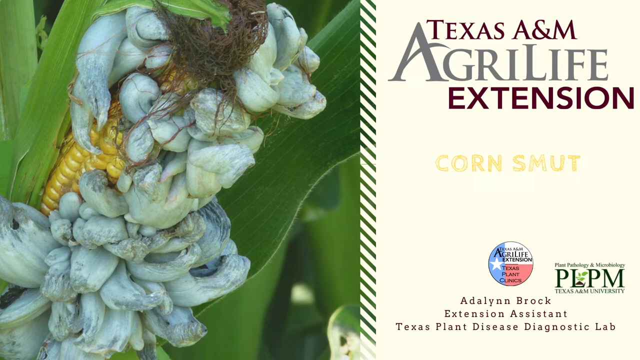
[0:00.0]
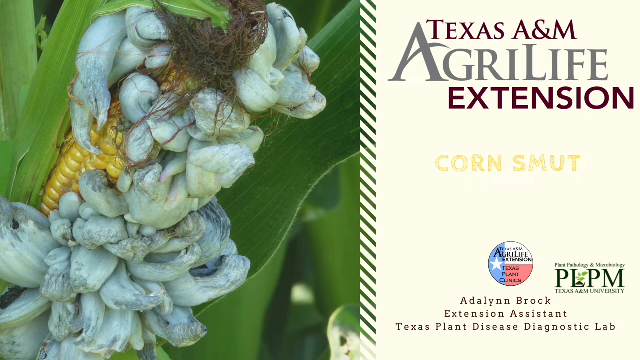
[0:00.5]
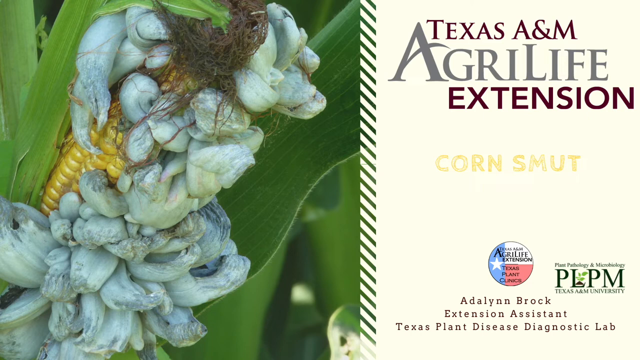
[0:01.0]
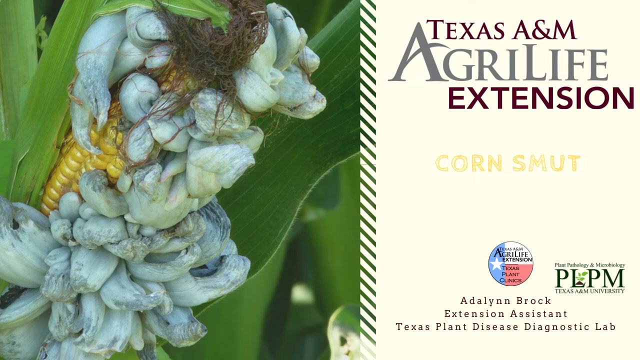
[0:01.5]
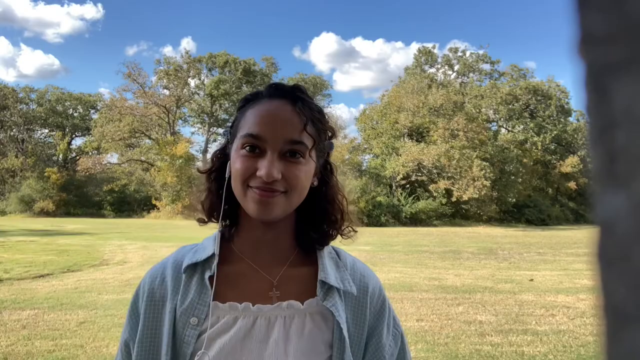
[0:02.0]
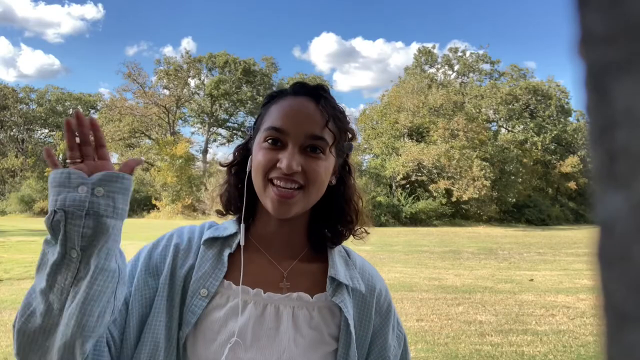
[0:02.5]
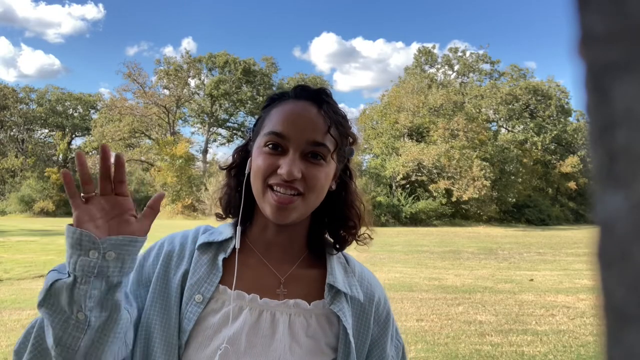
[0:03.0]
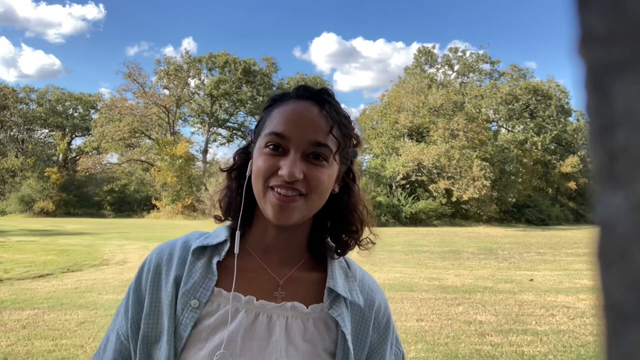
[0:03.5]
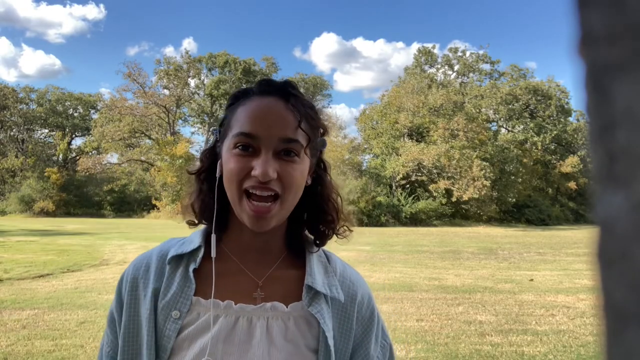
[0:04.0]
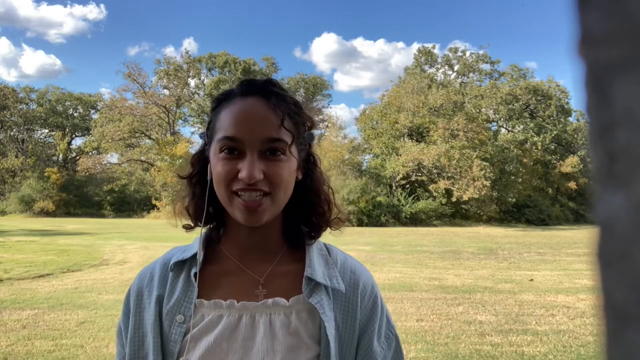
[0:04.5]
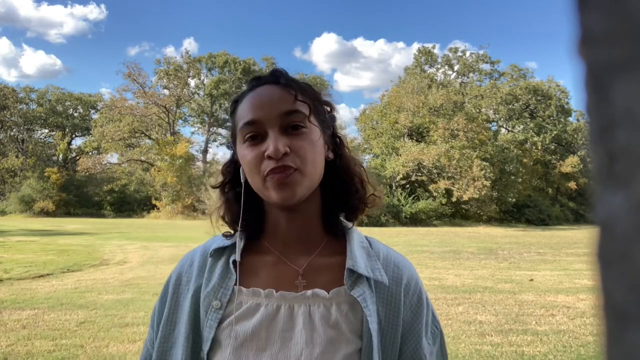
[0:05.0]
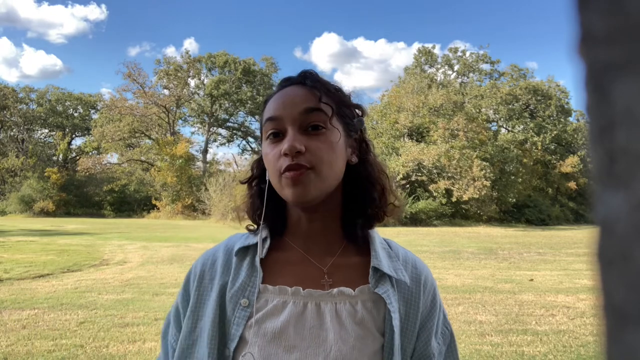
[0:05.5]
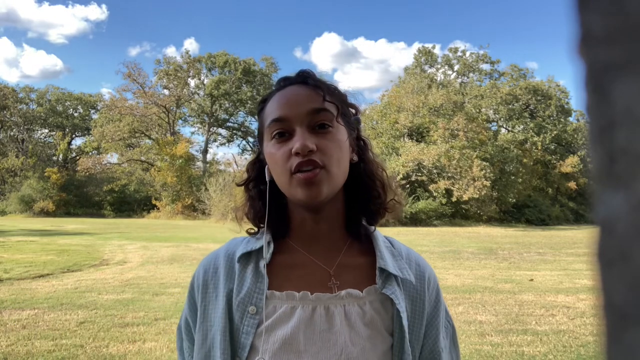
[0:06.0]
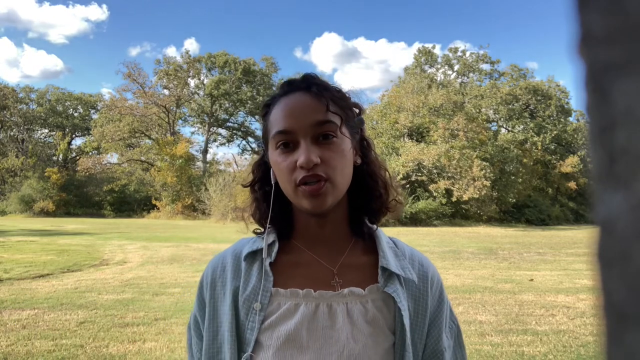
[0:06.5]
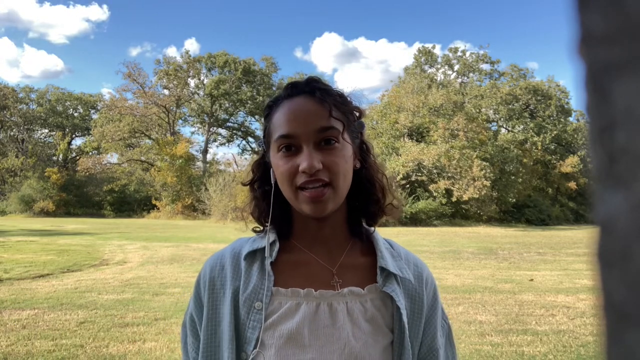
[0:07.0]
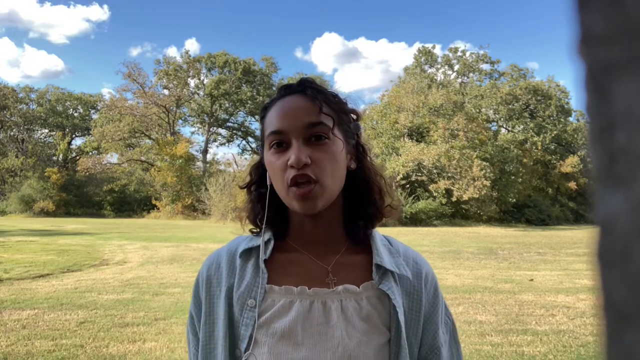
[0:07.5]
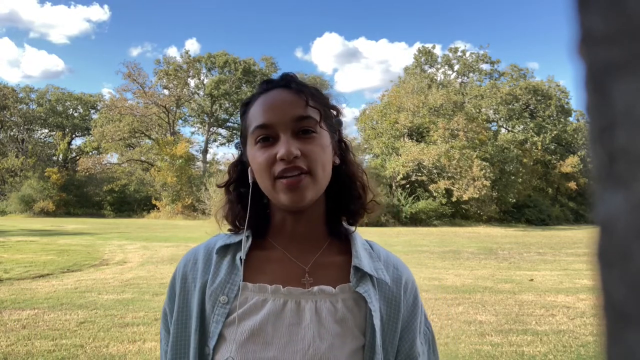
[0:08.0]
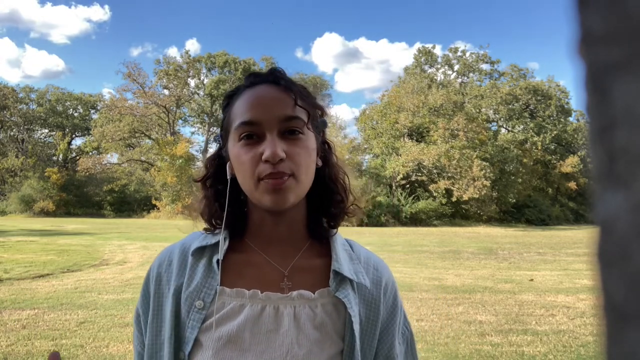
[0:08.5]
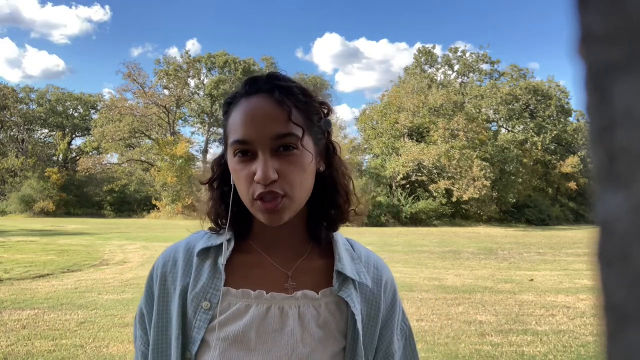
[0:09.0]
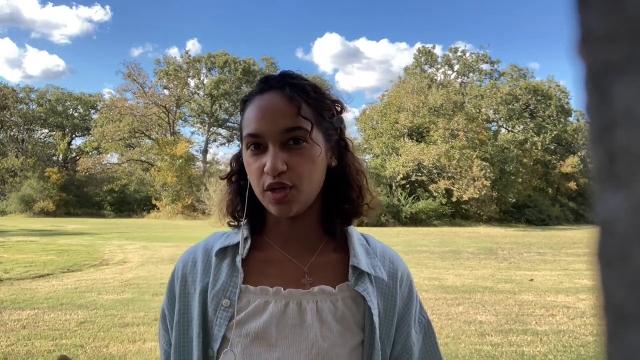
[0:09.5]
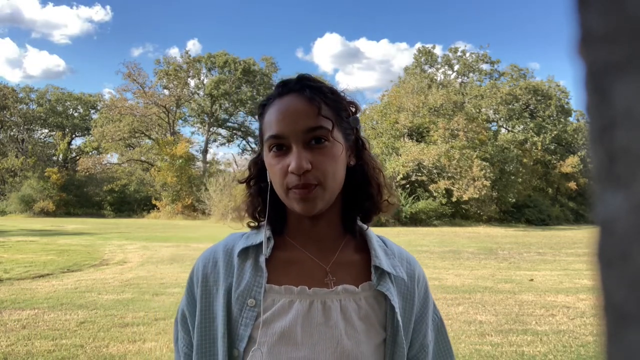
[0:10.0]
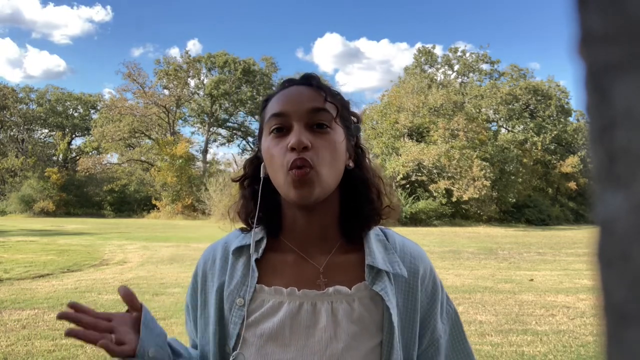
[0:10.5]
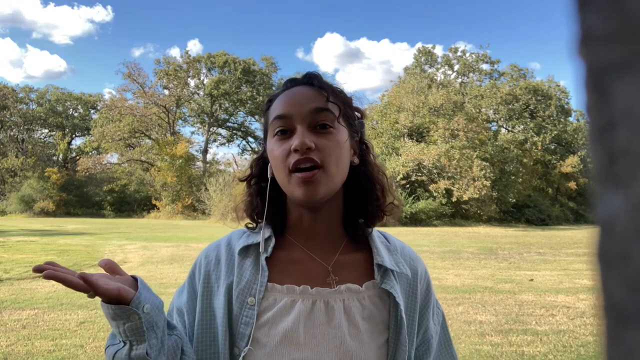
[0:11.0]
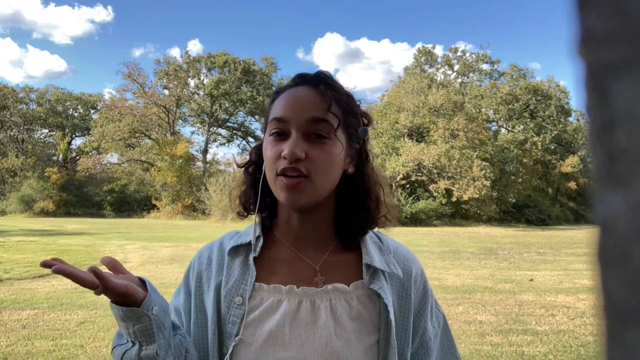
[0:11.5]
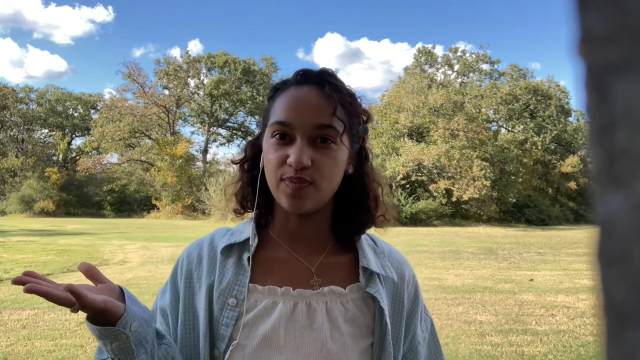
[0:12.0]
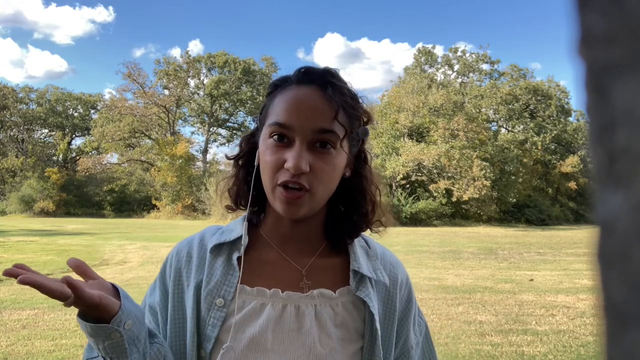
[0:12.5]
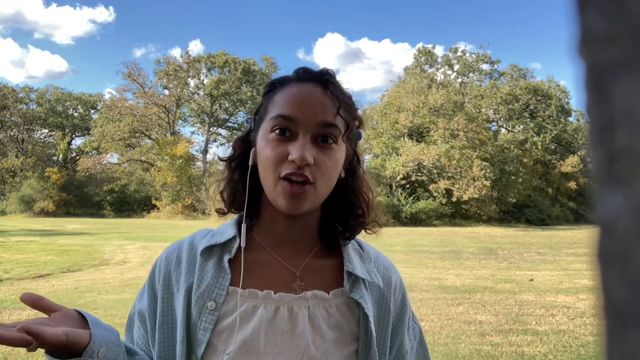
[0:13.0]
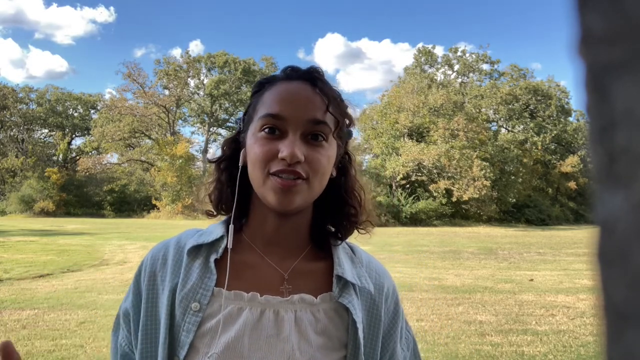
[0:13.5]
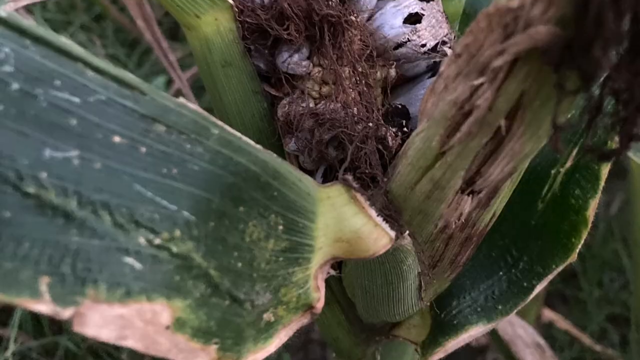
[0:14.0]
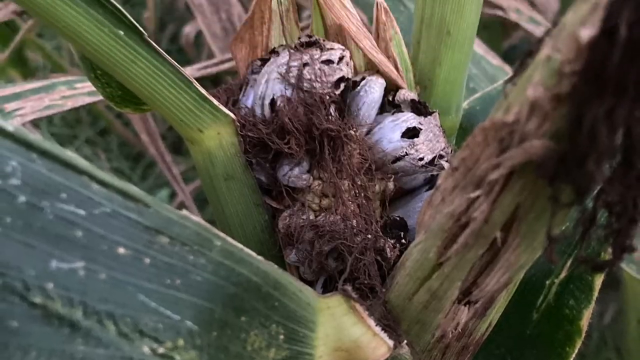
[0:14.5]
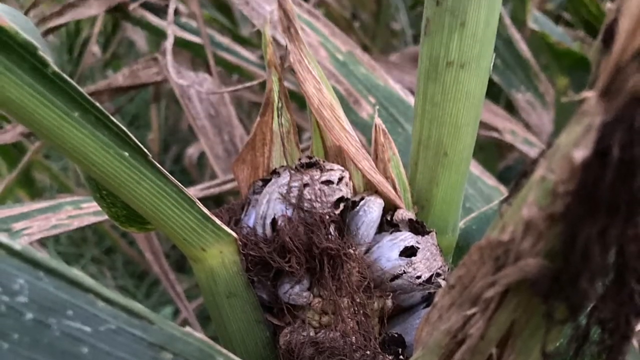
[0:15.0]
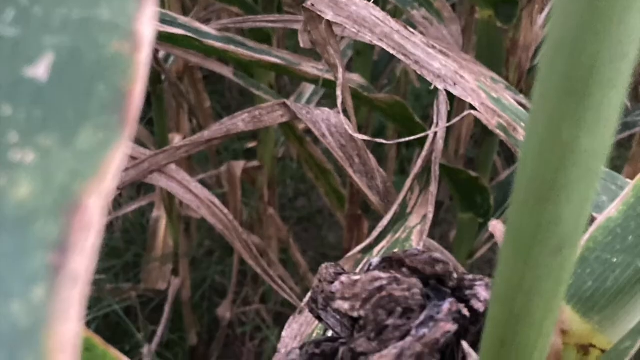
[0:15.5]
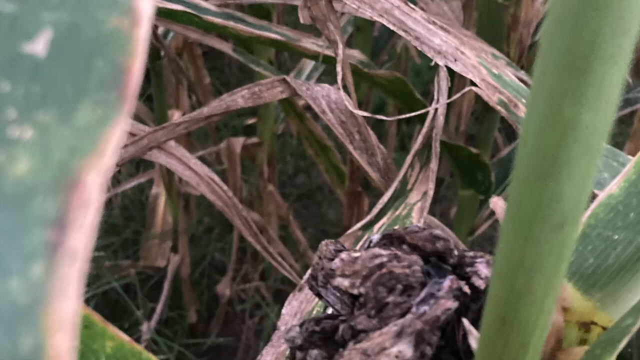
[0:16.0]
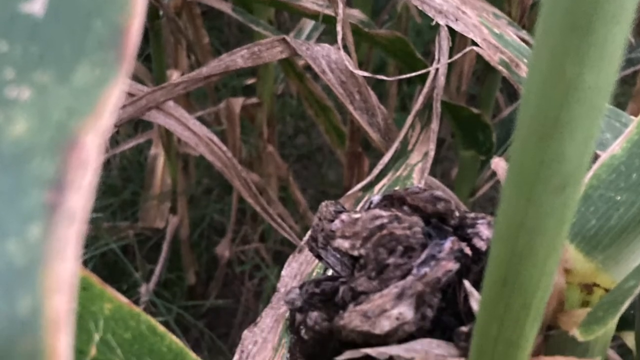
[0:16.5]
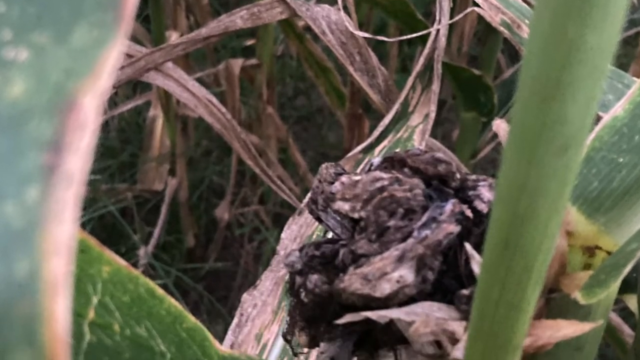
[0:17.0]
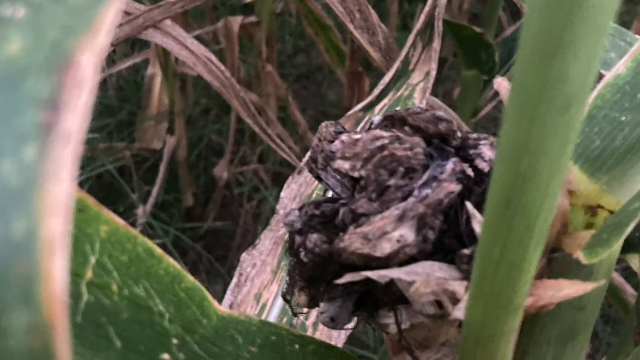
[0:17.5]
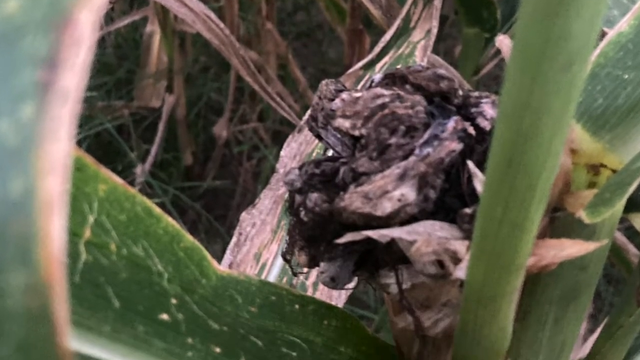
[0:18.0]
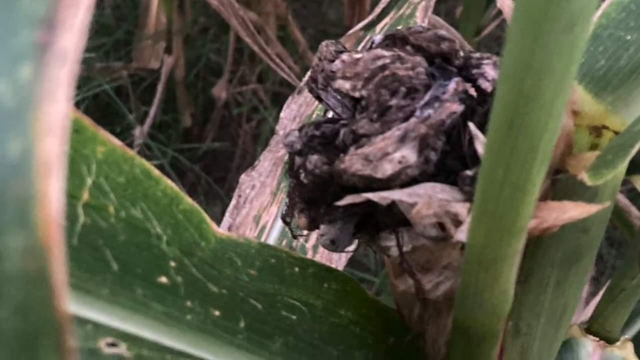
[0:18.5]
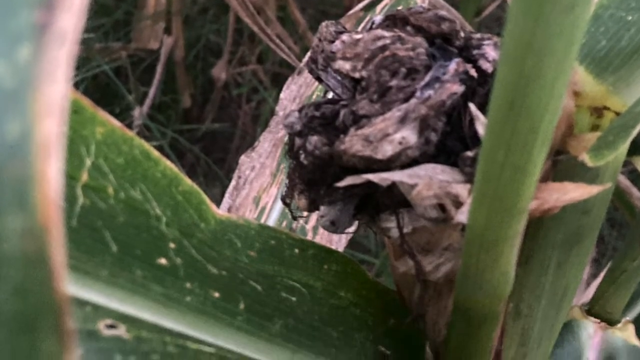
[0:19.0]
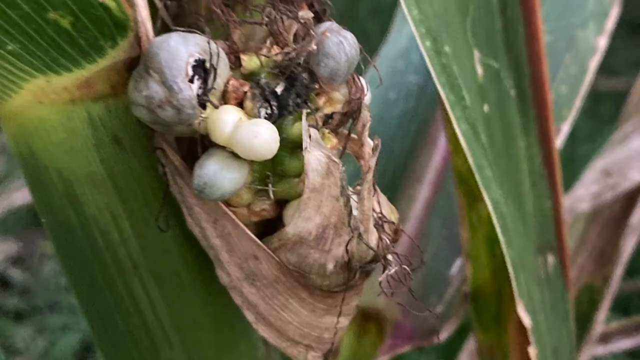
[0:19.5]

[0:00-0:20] A young woman talks to the camera. She has an earbud in and wears a white blouse and what looks like a blue denim jacket. The view then changes to a plant that looks somewhat like bamboo but might be corn. The setting appears rural, with a lot of land and many trees in the background. When the shot cuts to the trees, there appears to be a decayed piece of corn, possibly rotten. The corn, if it is corn, looks as though it is covered in bugs, though not crawling ones; it is black and shriveled.